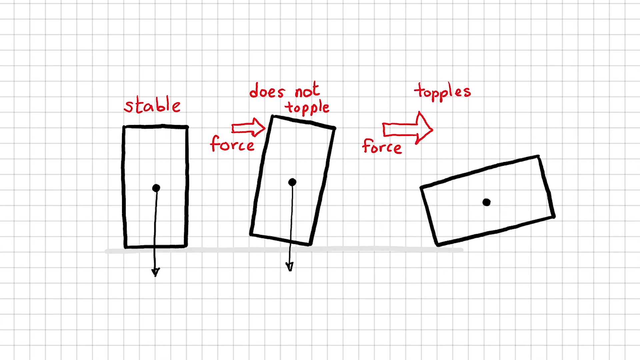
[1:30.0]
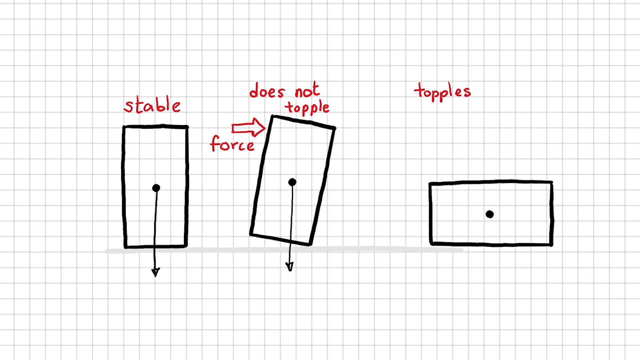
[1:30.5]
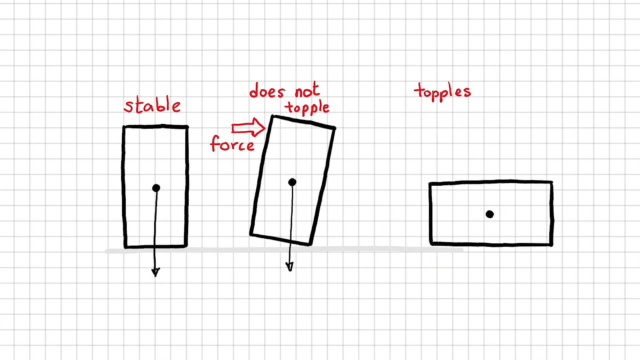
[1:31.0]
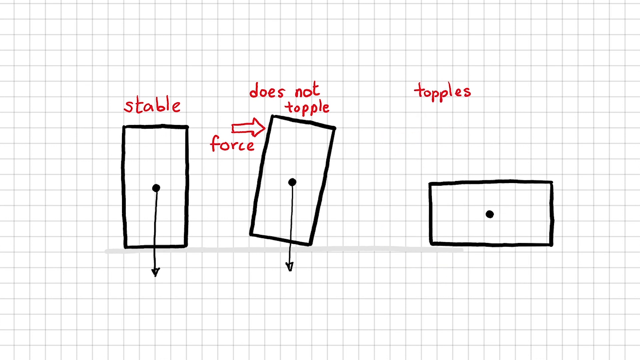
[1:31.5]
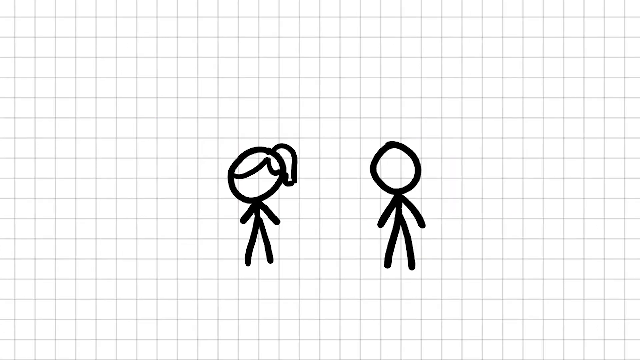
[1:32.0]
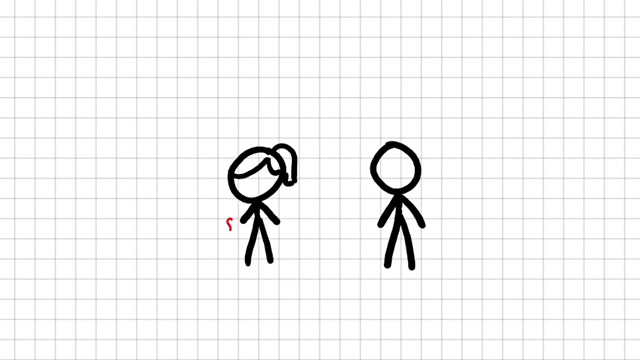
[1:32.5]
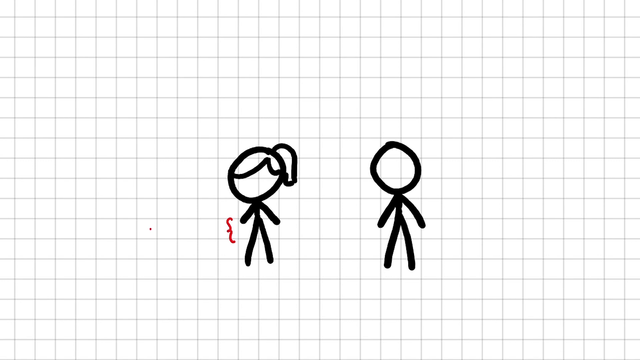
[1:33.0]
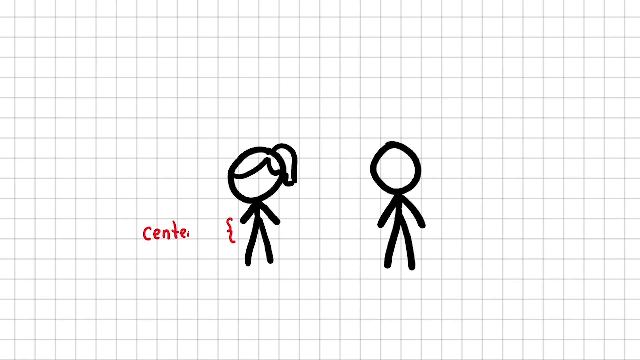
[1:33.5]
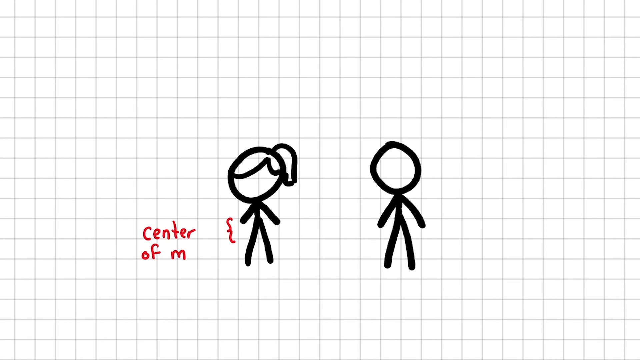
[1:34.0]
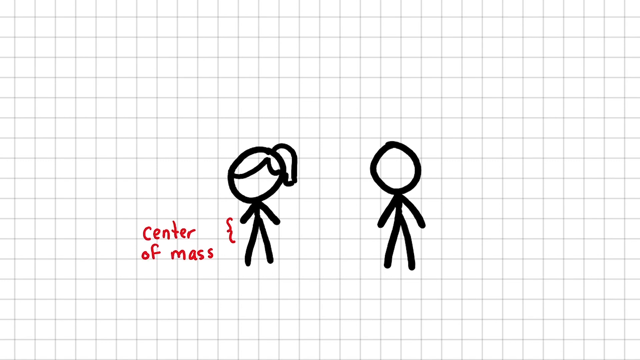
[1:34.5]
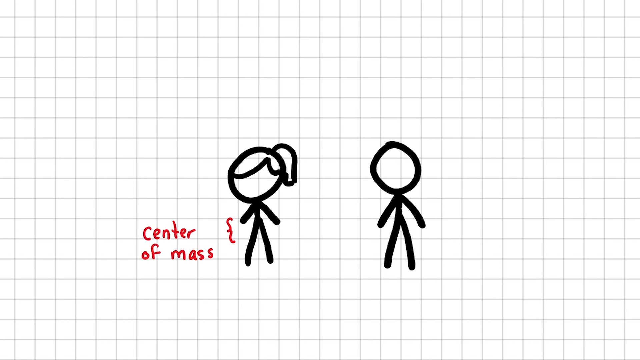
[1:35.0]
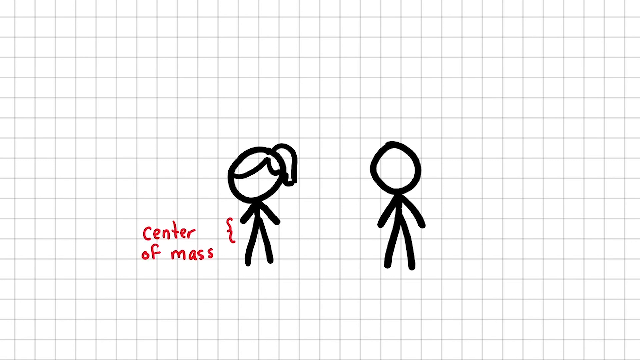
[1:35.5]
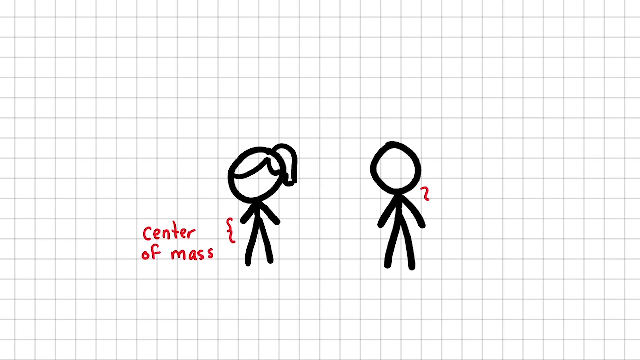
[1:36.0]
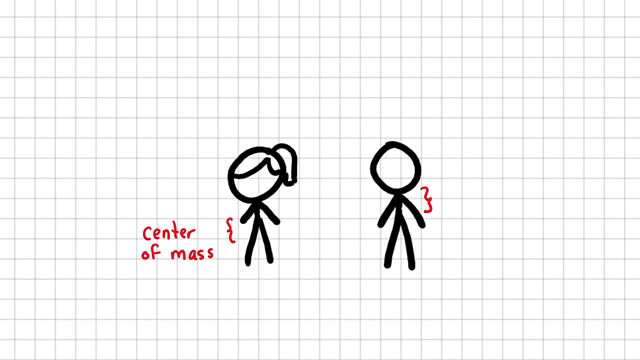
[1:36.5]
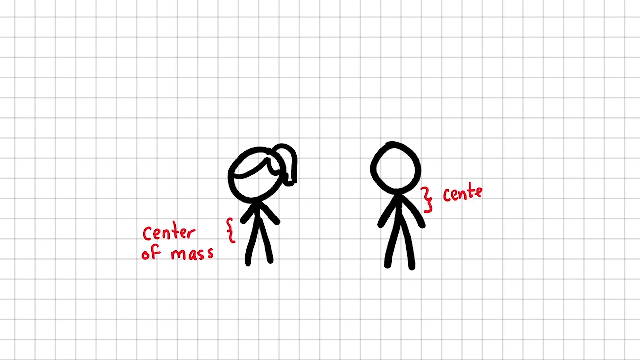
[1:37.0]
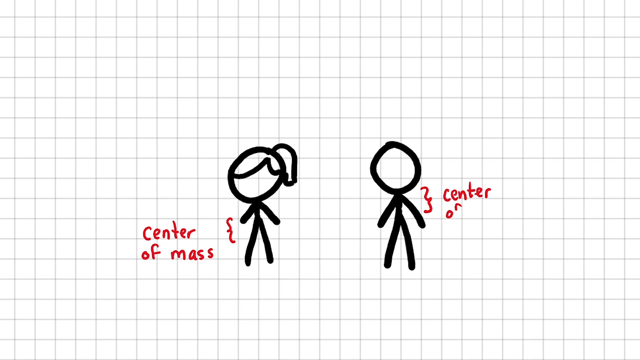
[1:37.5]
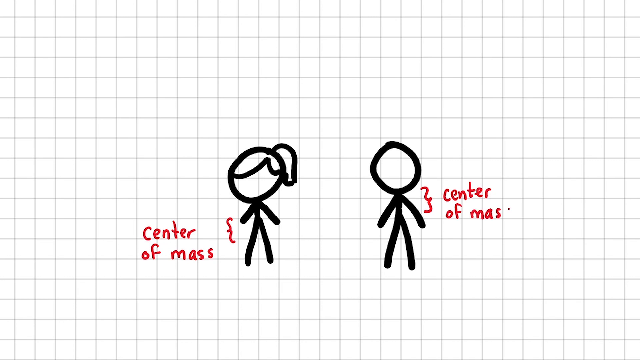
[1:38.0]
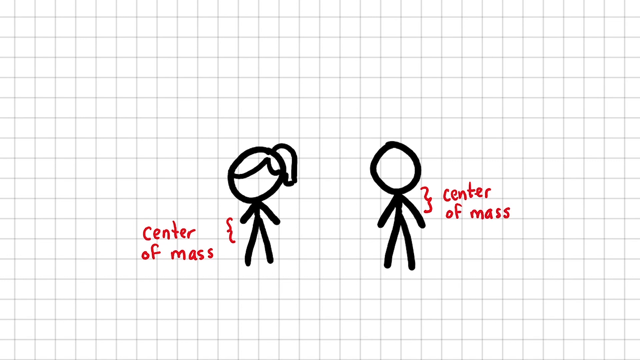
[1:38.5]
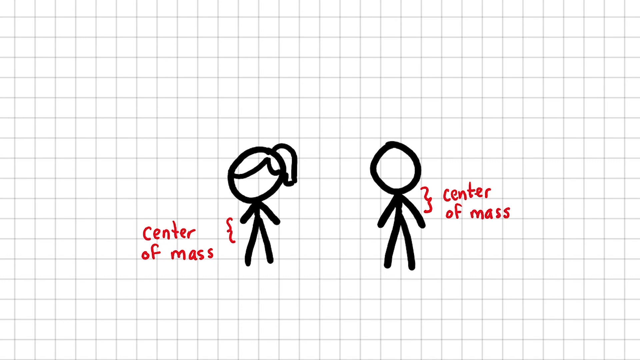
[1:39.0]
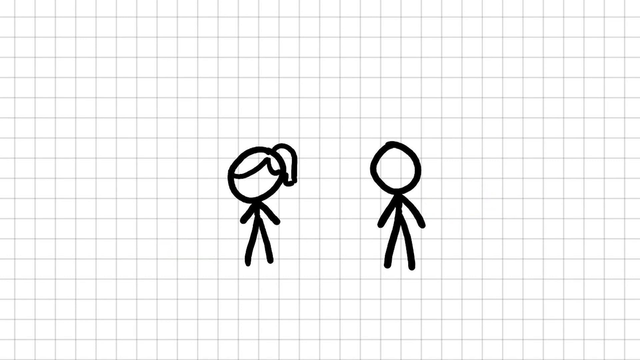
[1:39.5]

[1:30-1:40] The rectangles are shown moving from their stable position as a result of the force exerted on them. Two figures appear, a female figure and a male figure, with a label reading "centre of mass" in red letters on the female character and "centre of mass" also shown on the other side of the male character. The rectangles shown initially change position from one position to another as a result of the force exerted on them.